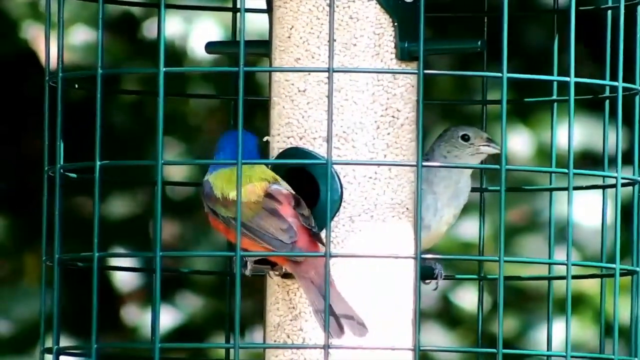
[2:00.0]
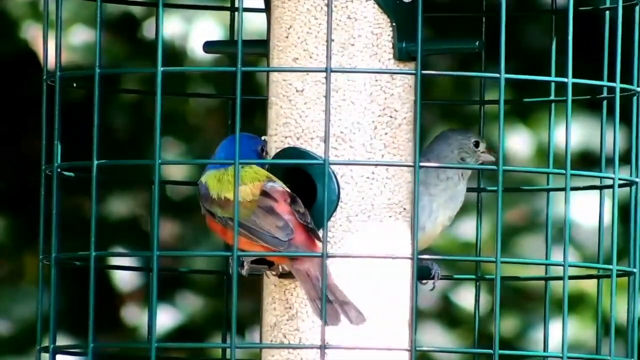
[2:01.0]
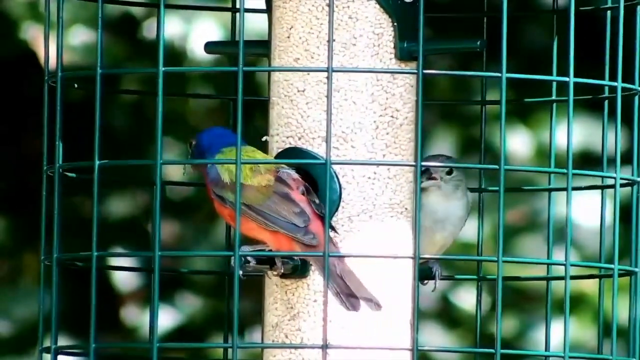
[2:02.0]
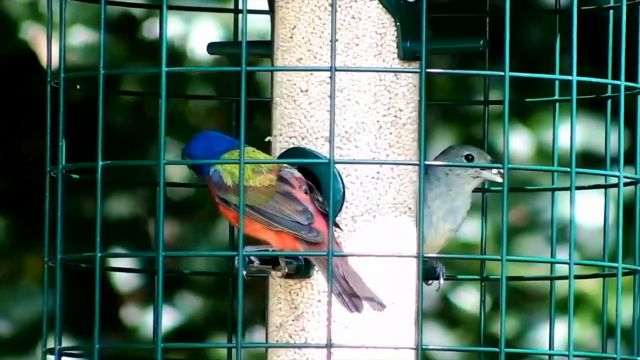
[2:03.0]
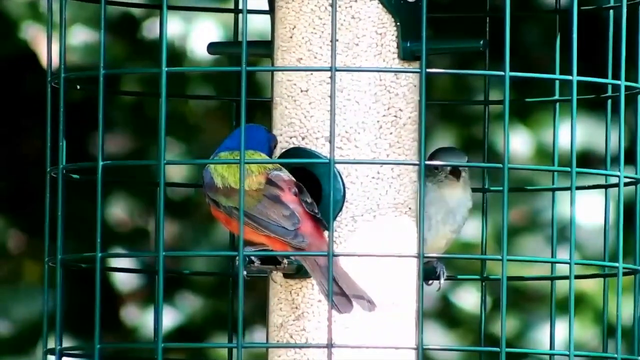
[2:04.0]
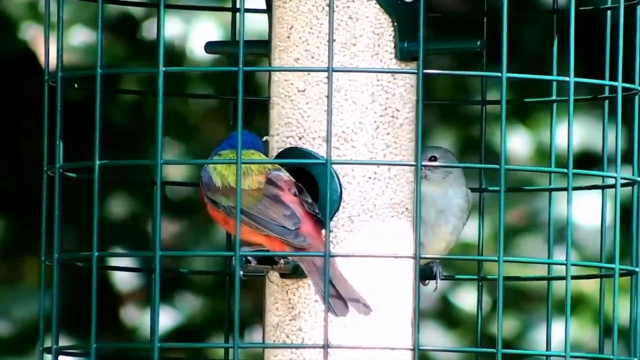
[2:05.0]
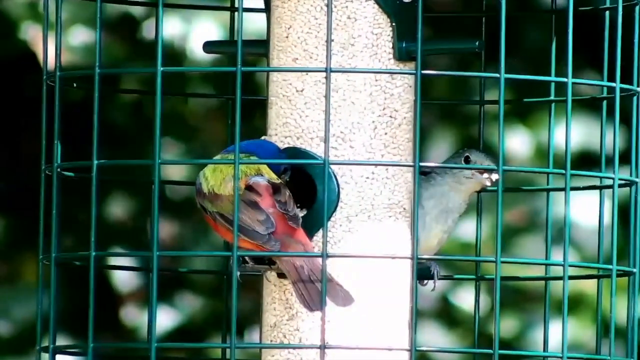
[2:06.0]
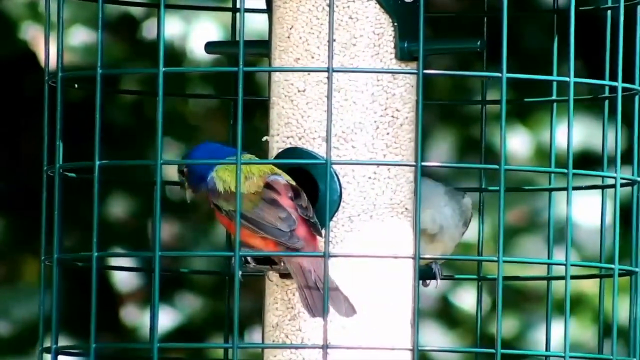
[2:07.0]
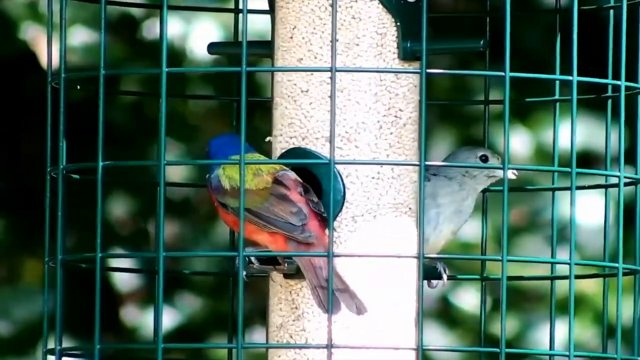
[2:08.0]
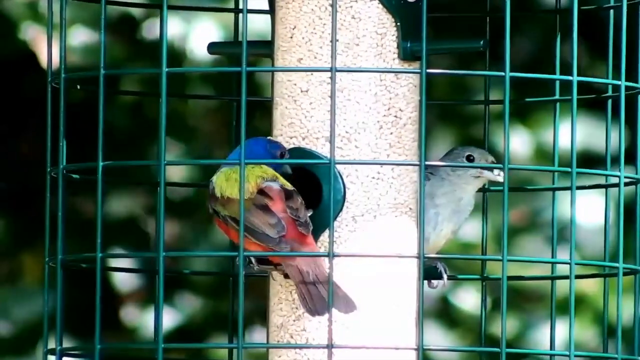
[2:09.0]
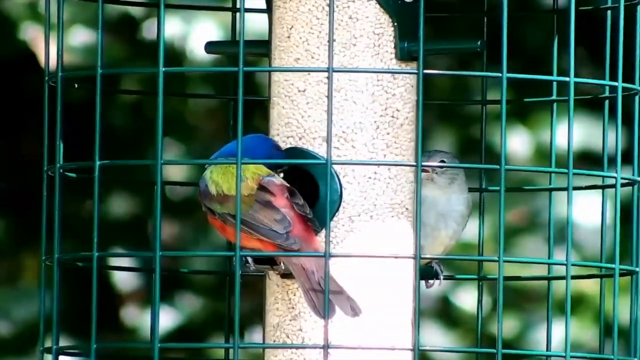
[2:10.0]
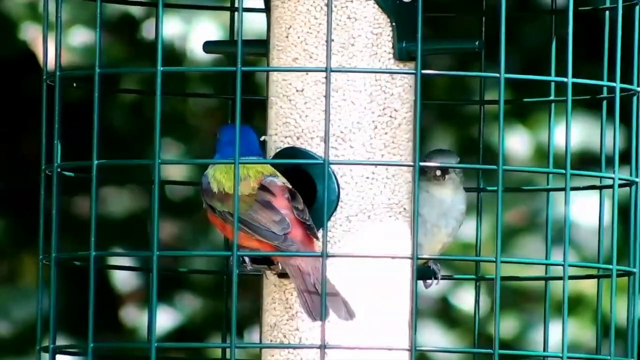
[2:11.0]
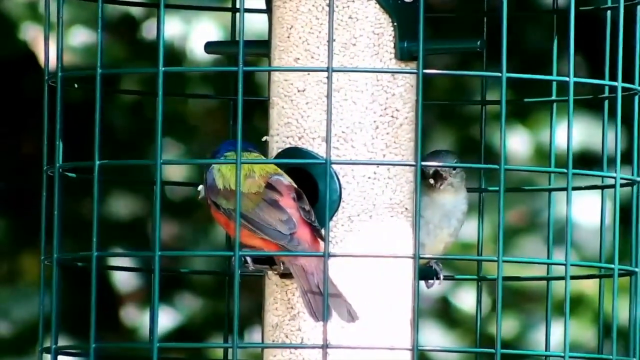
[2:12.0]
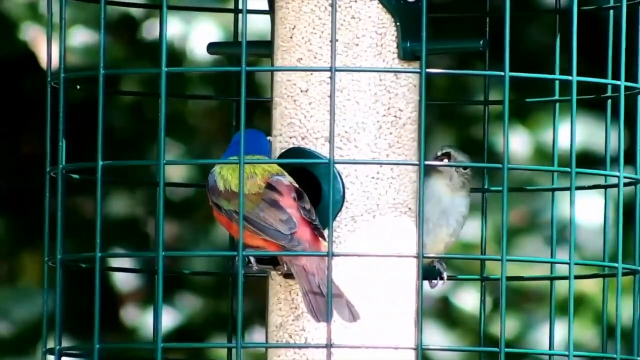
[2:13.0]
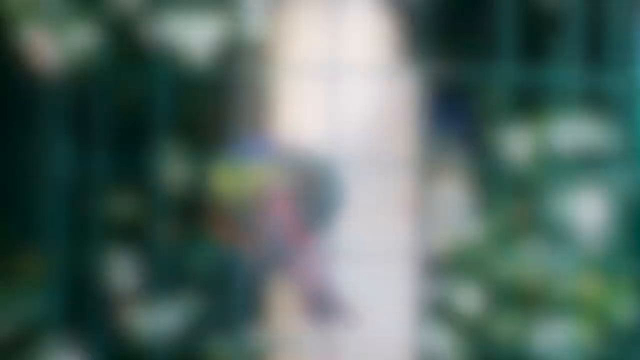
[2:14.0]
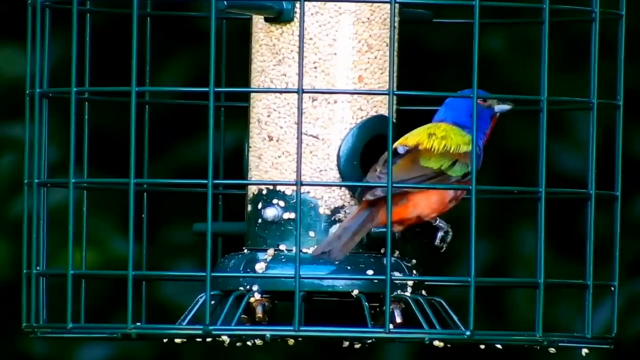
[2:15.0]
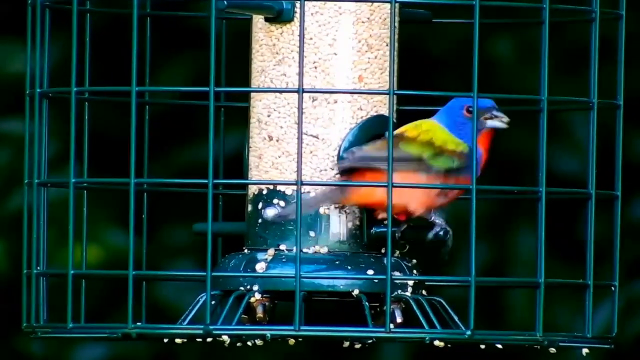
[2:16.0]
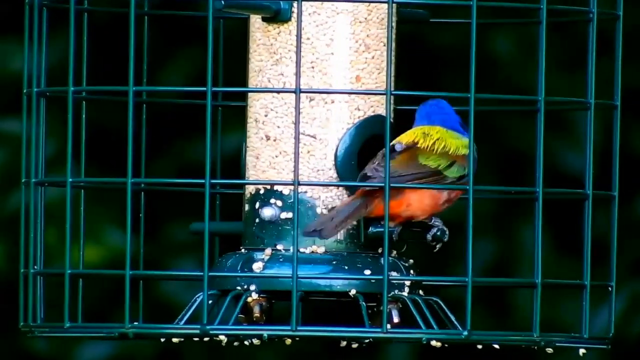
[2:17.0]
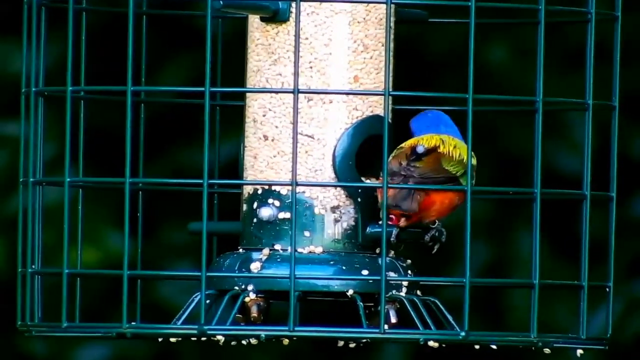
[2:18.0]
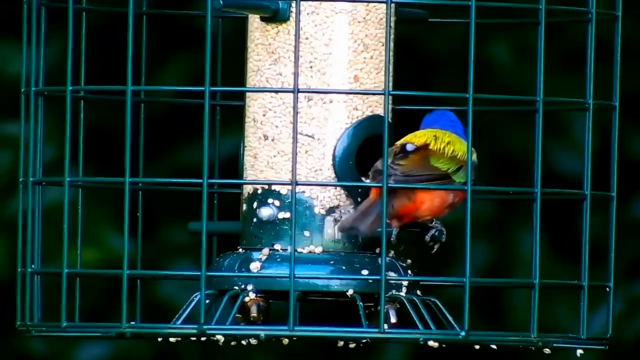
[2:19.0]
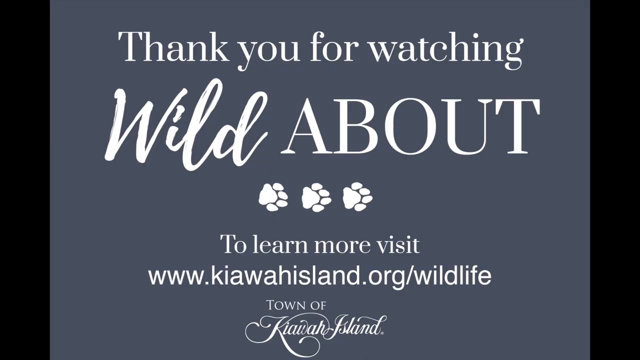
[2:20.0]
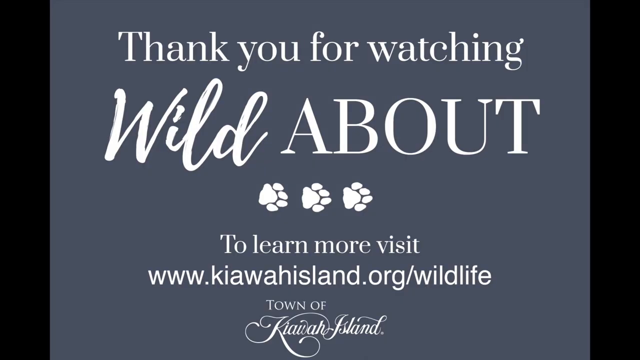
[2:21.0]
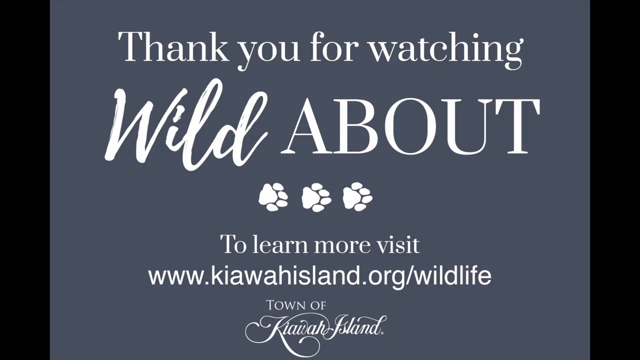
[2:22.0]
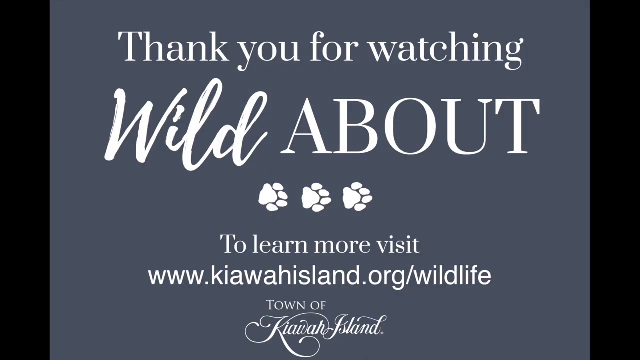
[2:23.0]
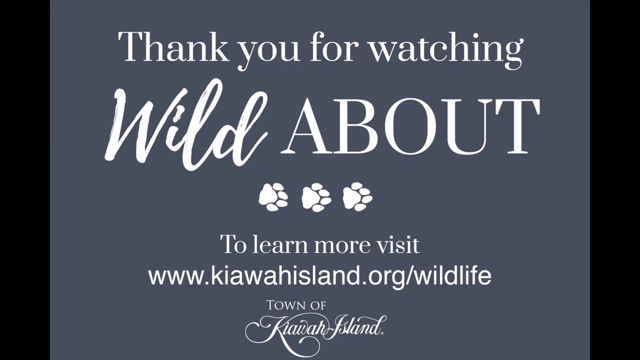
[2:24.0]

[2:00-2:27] Two birds are inside the bird feeder, one on each perch on either side of the seed container. The bird at the front has the blue head, yellow-green feathers on the back and a red body; the other is a green-grey bird with a big beady eye. Both eat the seeds, discarding the cases as they feed. Trees are visible in the background, and the seed feeder sways slightly in the breeze. A close-up shows their feet curved around the perches. A round green metal or plastic cage surrounds the feeder, and the birds sit inside it. Another angle of the feeder shows the bird with the blue head, yellow-green feathers on the back and red feathers on the body continuing to eat seeds and discard the shells. The title page then returns on the grey background, reading "Thank you for watching wild about" with 3 paw prints, and "To learn more visit www.kiawahisland.org/wildlife" and "Town of Kiawah Island".